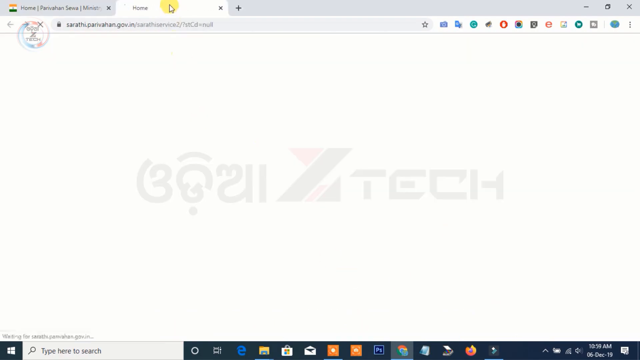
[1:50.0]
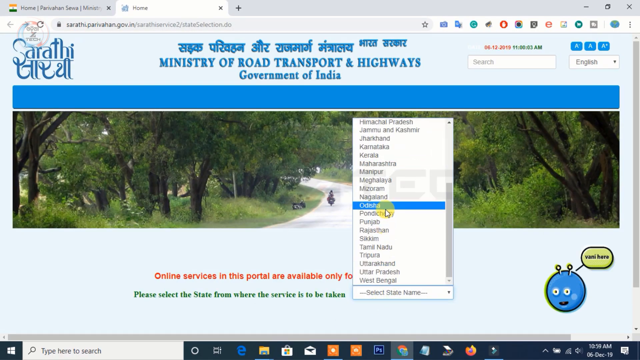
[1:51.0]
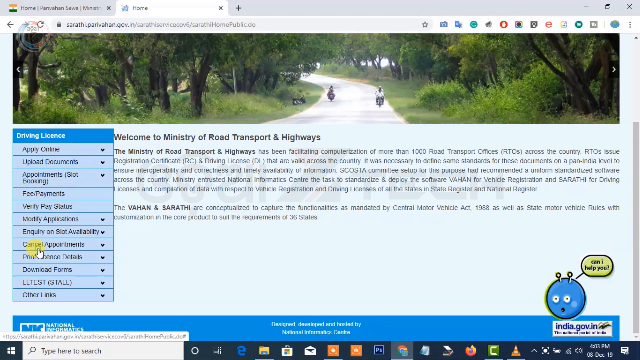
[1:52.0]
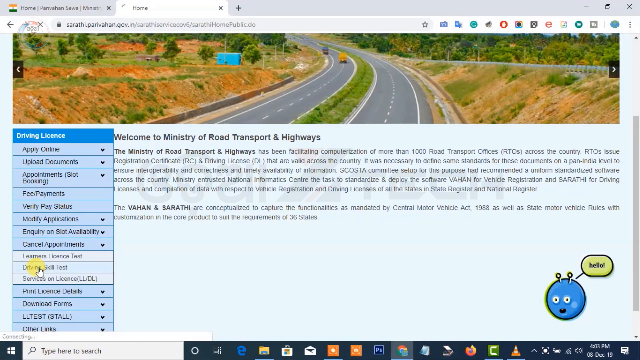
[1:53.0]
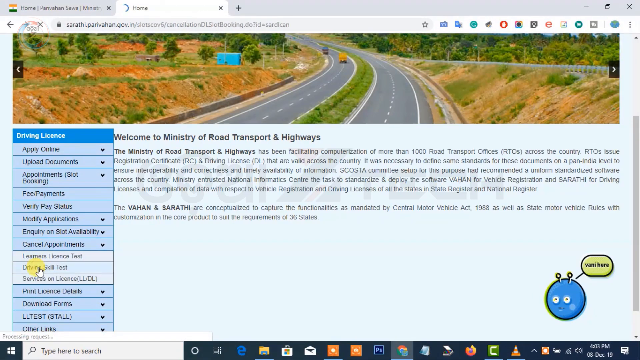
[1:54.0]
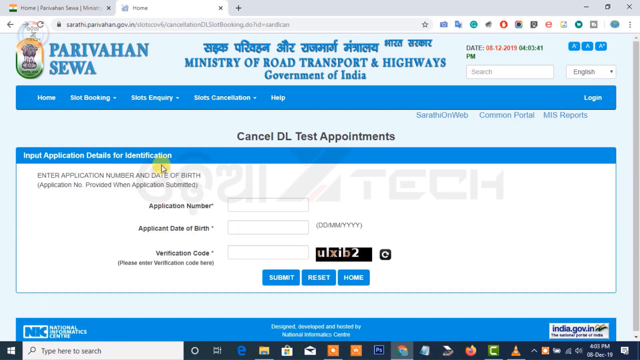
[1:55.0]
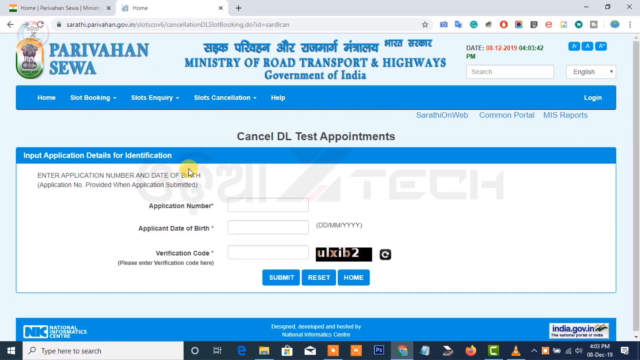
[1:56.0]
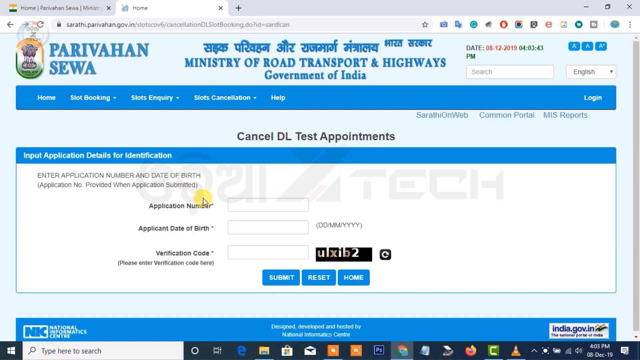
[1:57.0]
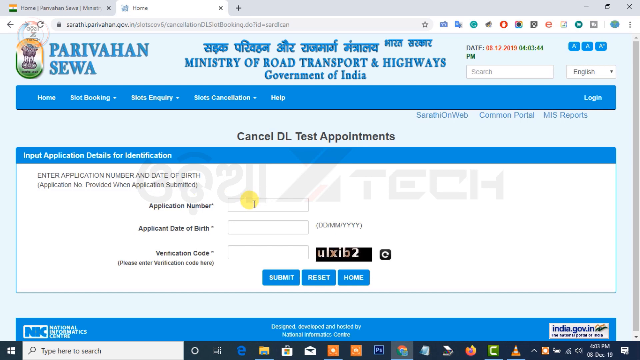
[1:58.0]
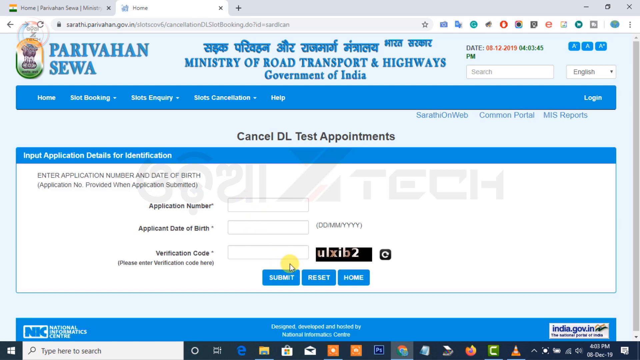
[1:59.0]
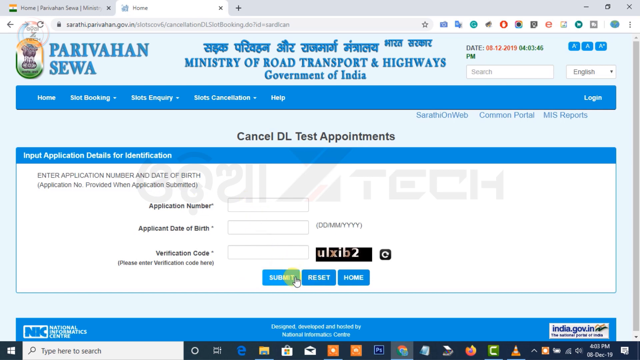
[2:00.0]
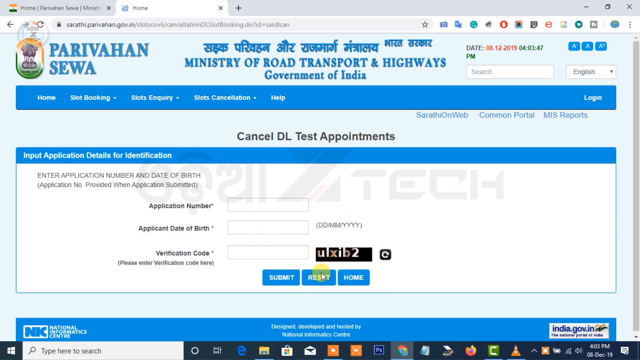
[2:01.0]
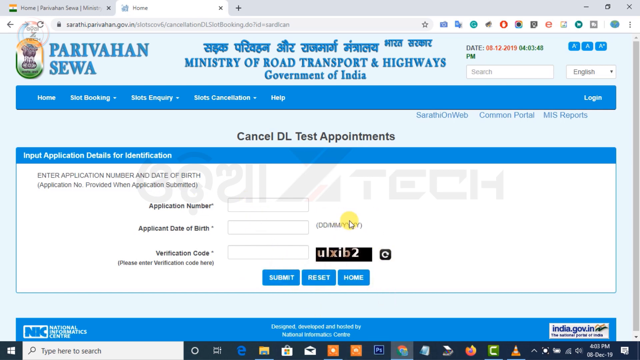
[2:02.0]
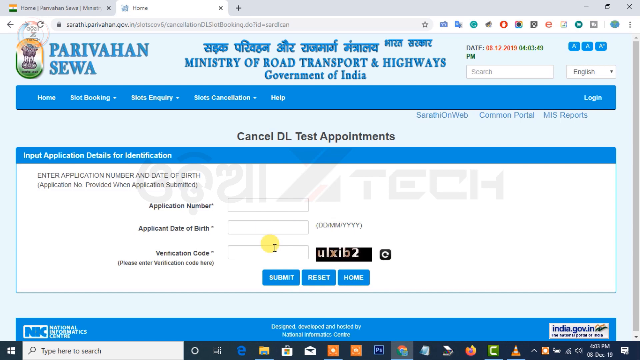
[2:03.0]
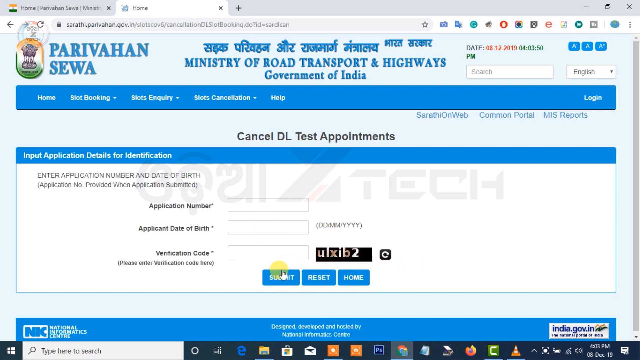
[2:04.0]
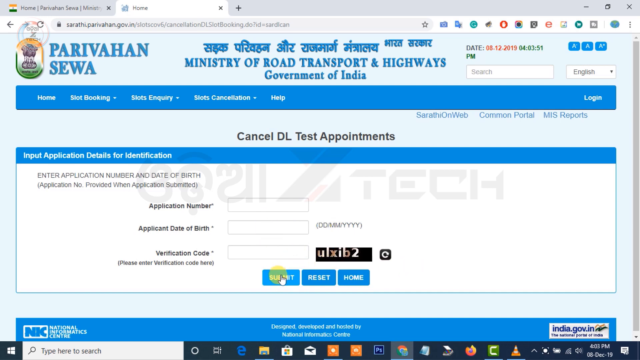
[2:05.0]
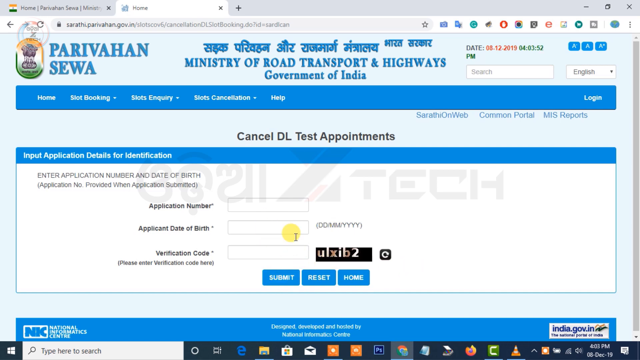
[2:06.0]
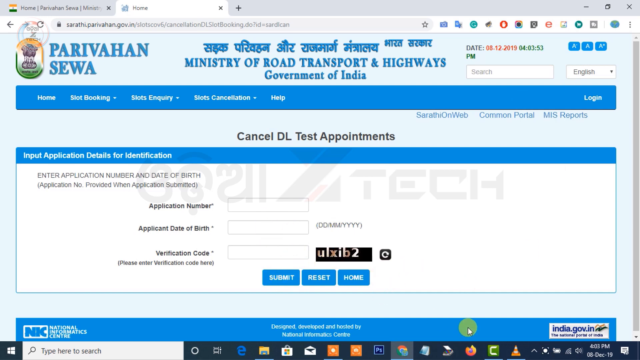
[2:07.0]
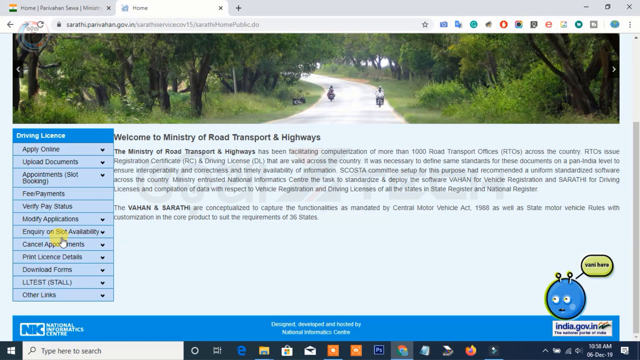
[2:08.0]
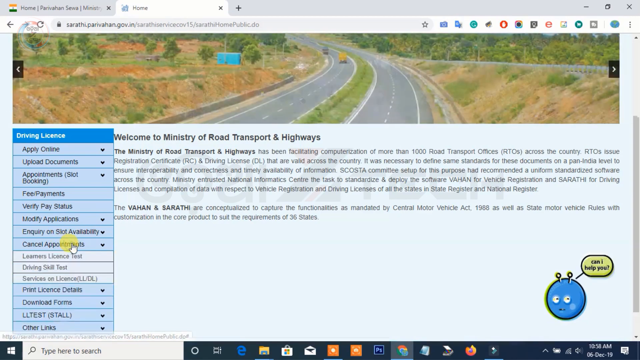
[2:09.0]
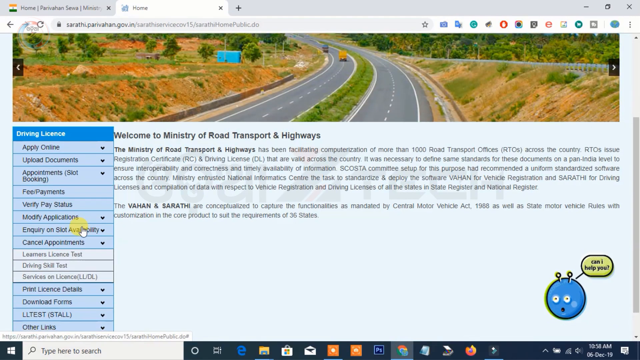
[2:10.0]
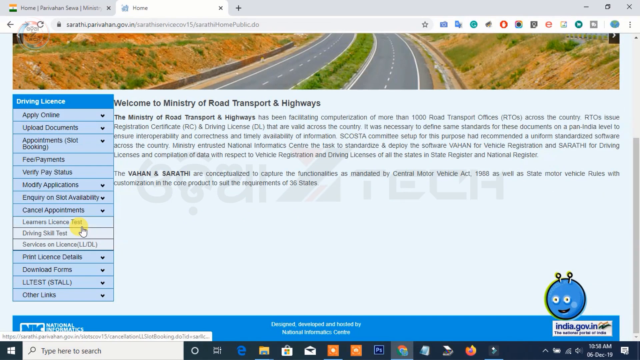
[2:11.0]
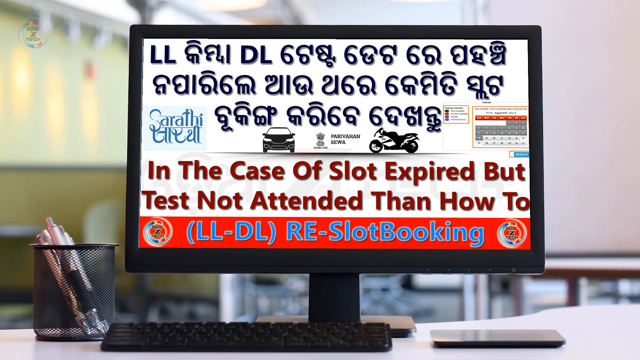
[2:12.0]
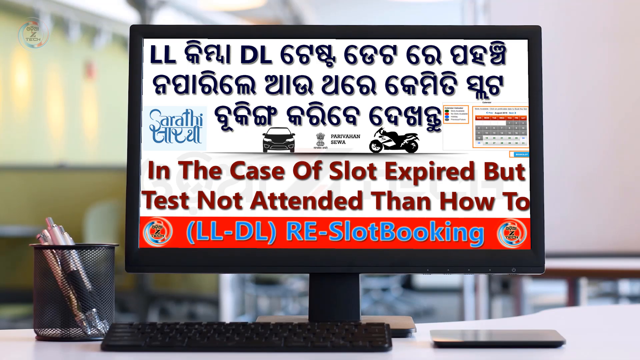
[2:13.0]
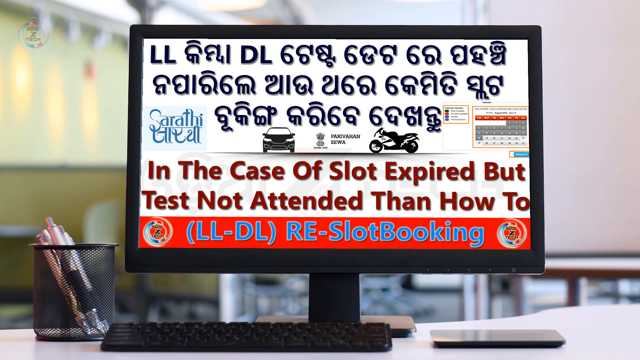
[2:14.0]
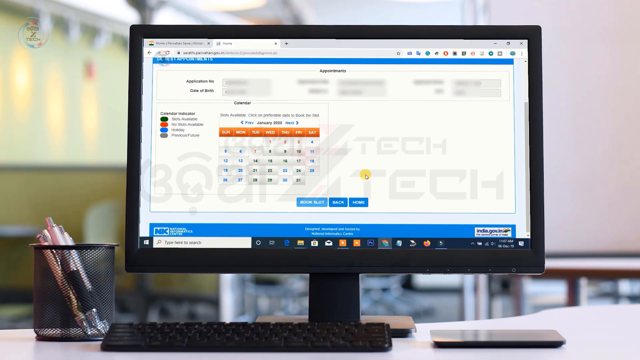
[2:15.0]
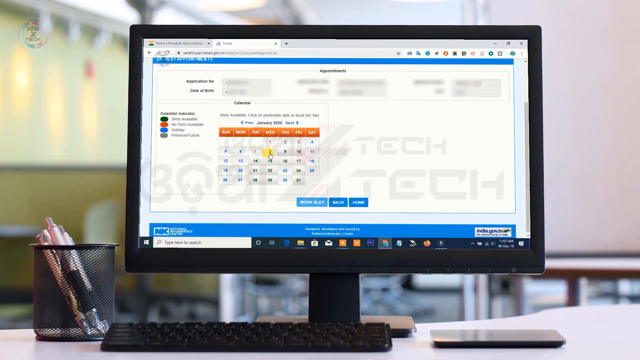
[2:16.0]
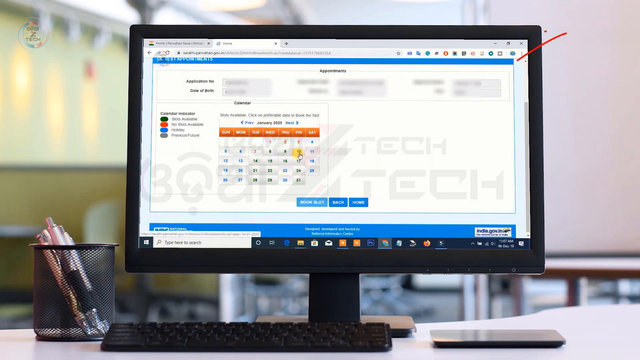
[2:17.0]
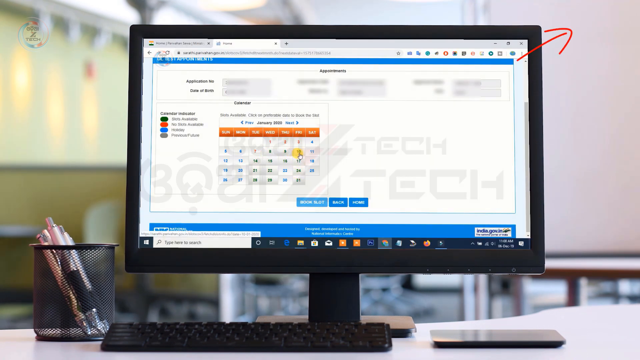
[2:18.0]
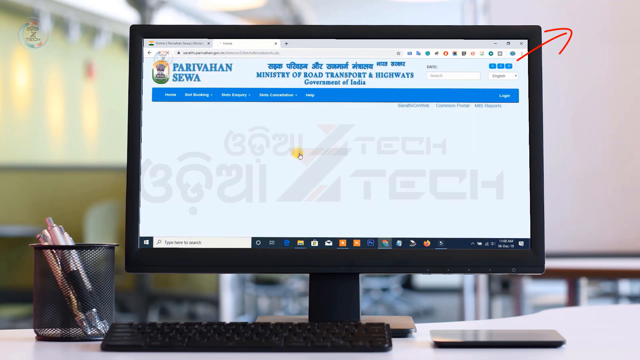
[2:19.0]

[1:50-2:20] The main page reading "Welcome to Ministry of Road, Transport and Highways" appears, with its fairly long first paragraph and the short paragraph below it about the Vahan and the Sarathi. The person moves the arrow to "Cancel DL Test Appointment". The information boxes there are empty; the cursor hovers over the application number, moves past the date of birth and verification code fields, rests on the Submit button for a moment, and then circles over the other fields on the page. The first page returns and is then replaced by a picture of a computer screen showing text in an unreadable, different language, possibly Sanskrit. The only English words read "in the case of slot expired, but test not attended, then how-to" and "LLDL (reslot booking)". A minimized version of the page with the calendar is shown.